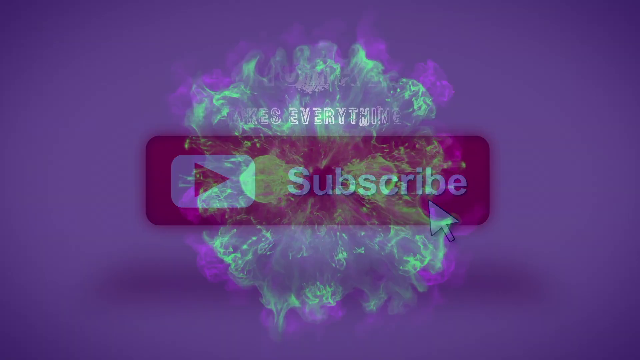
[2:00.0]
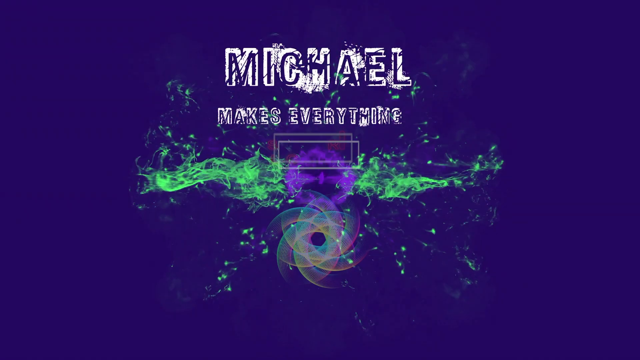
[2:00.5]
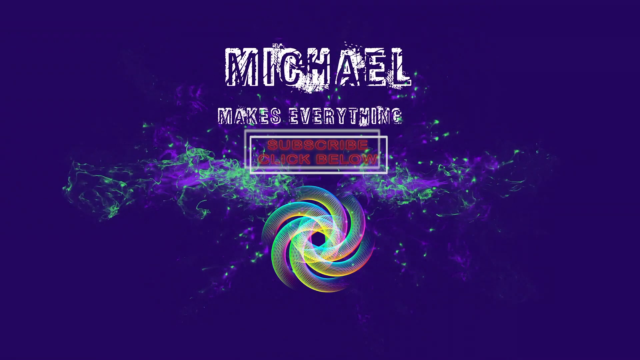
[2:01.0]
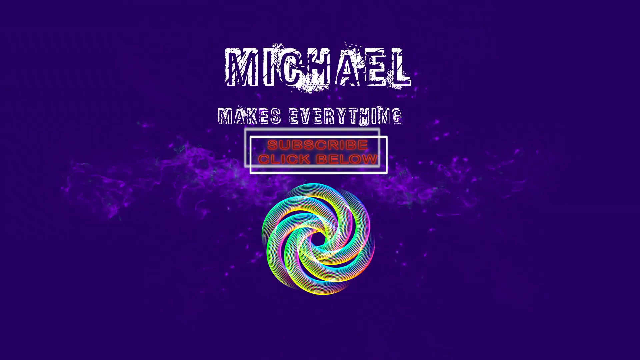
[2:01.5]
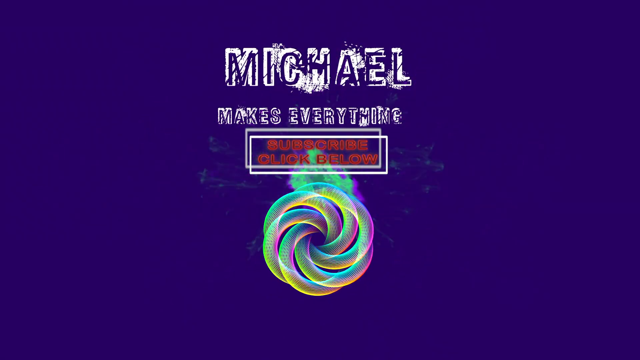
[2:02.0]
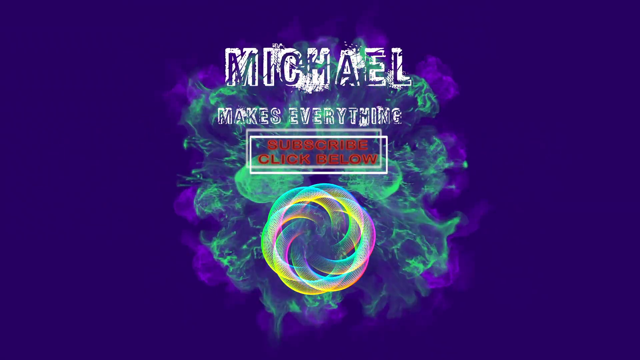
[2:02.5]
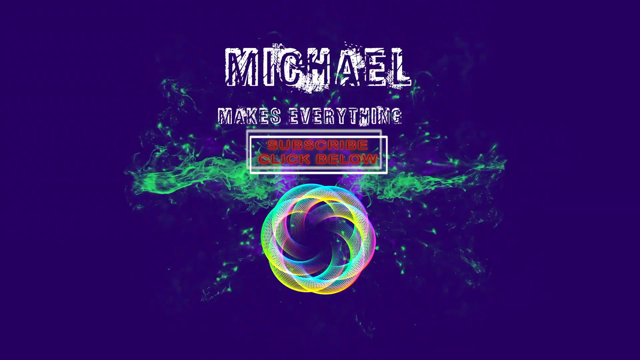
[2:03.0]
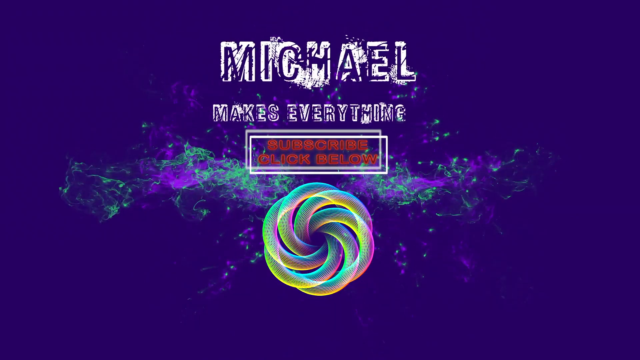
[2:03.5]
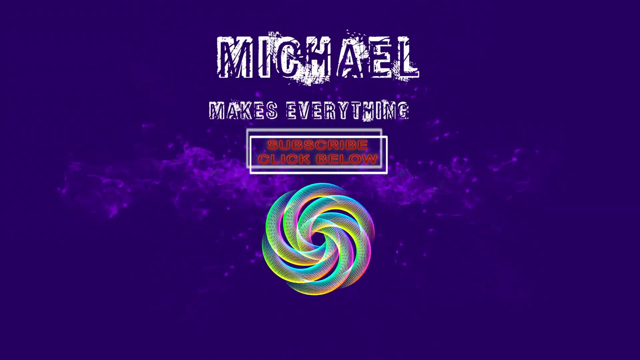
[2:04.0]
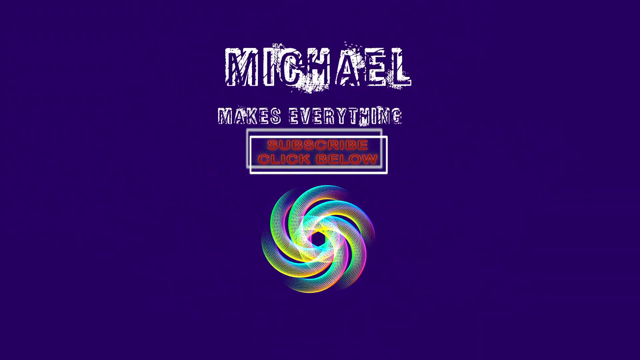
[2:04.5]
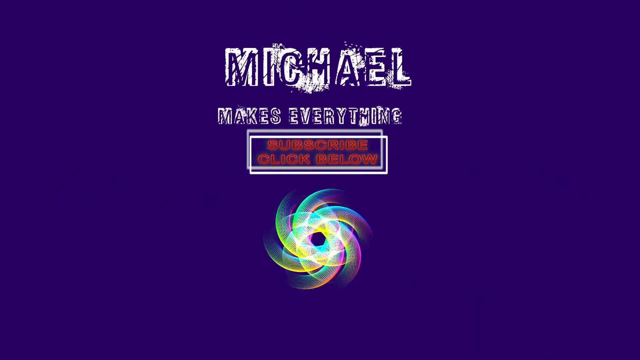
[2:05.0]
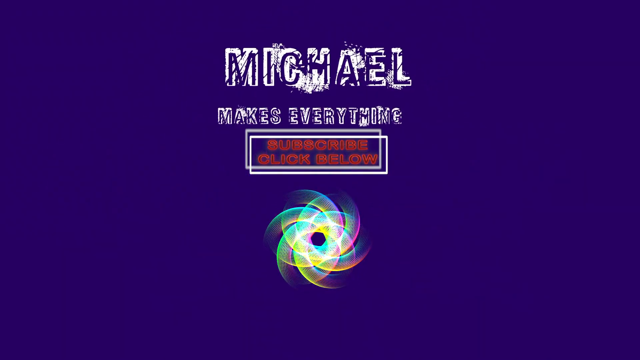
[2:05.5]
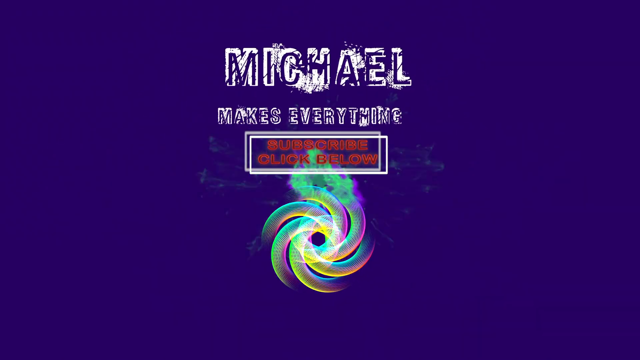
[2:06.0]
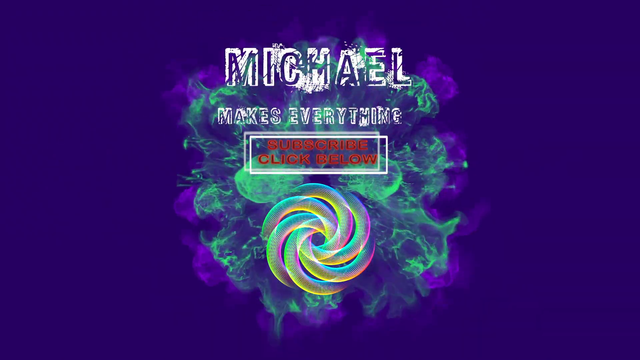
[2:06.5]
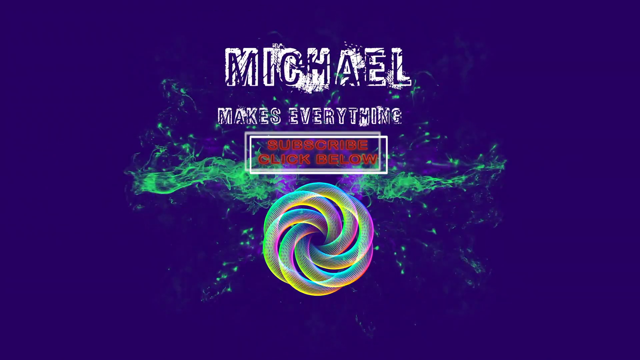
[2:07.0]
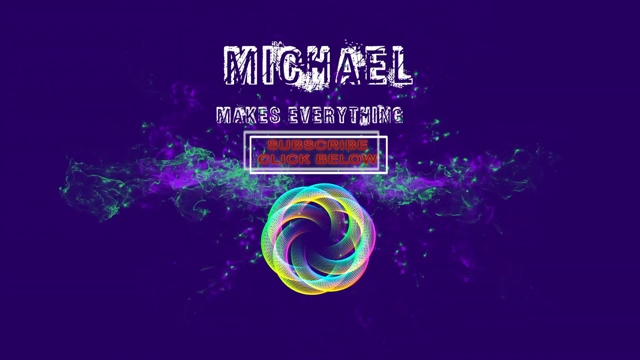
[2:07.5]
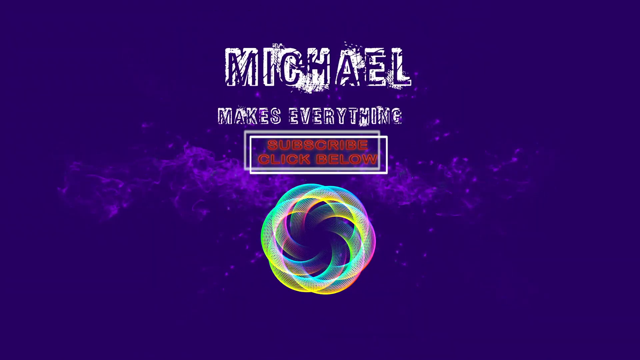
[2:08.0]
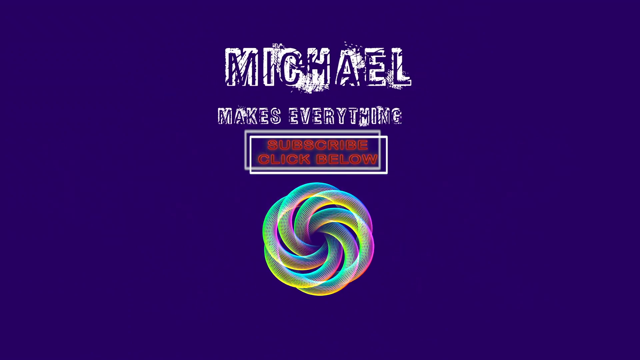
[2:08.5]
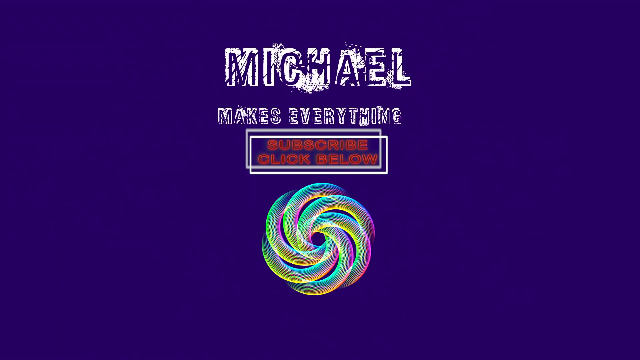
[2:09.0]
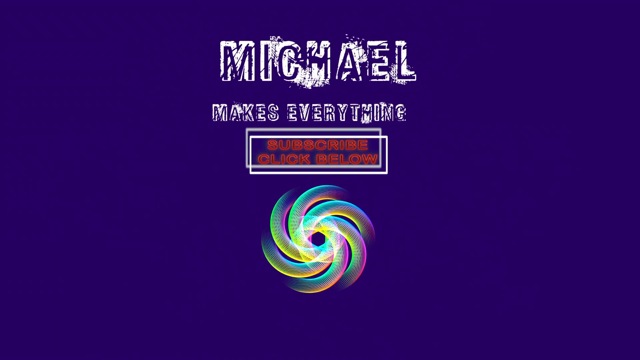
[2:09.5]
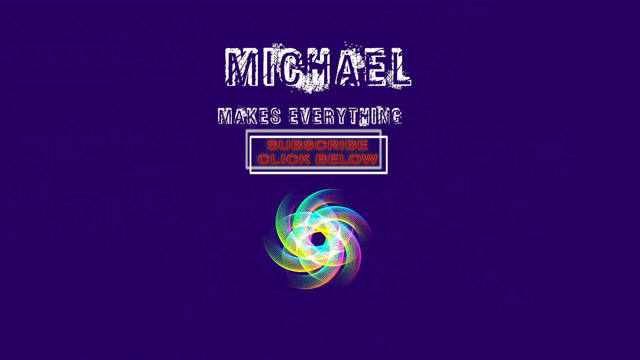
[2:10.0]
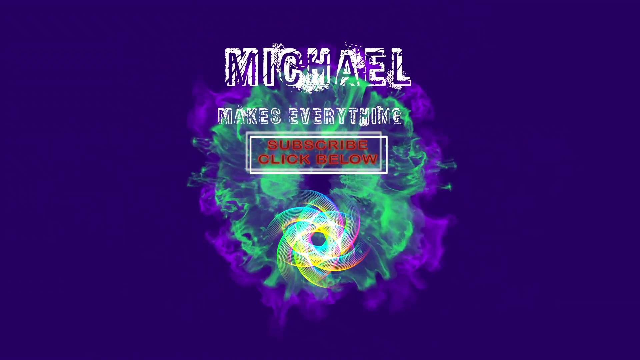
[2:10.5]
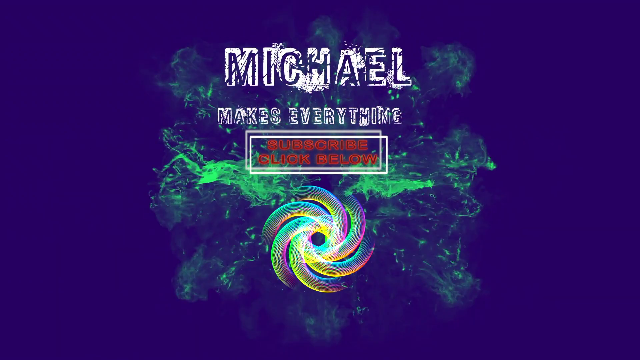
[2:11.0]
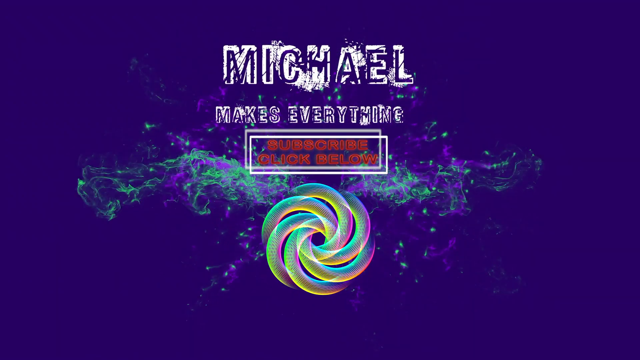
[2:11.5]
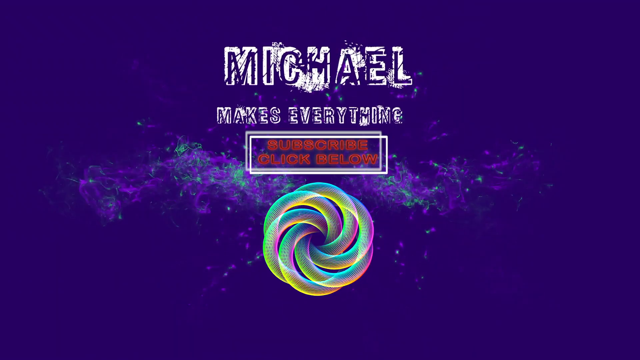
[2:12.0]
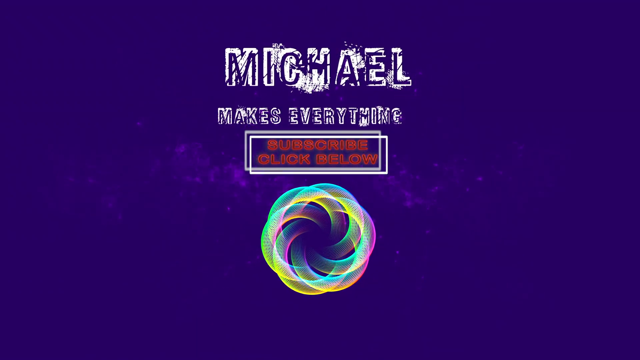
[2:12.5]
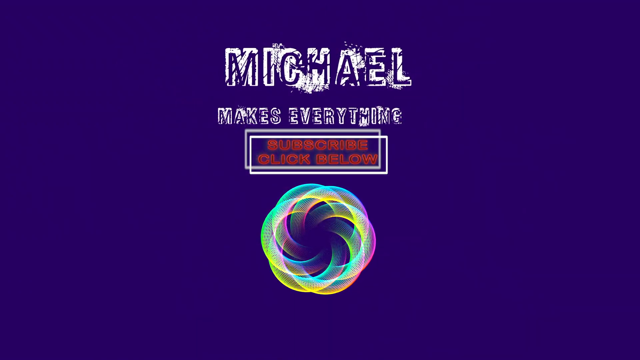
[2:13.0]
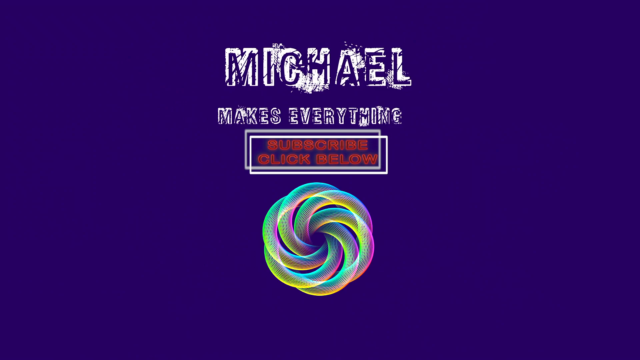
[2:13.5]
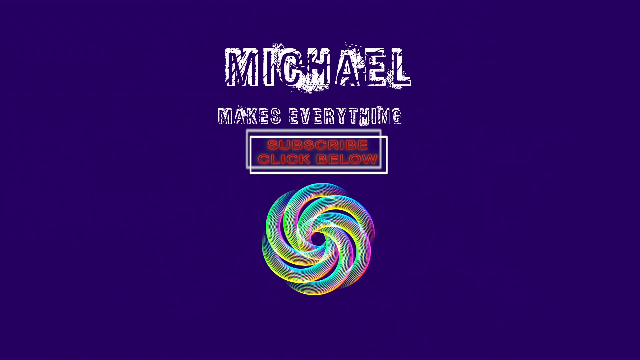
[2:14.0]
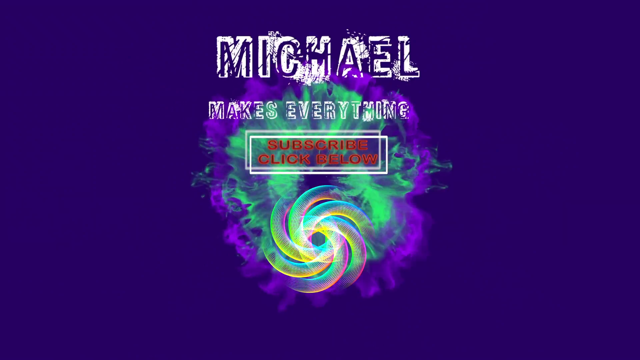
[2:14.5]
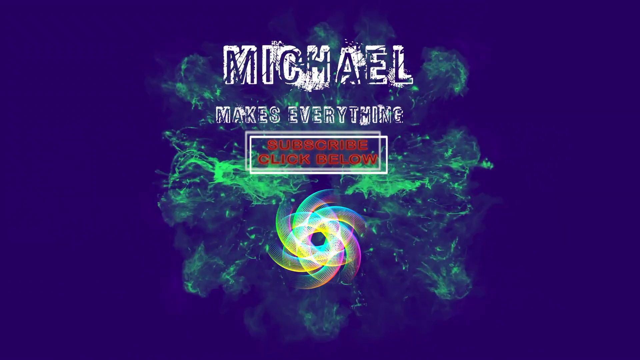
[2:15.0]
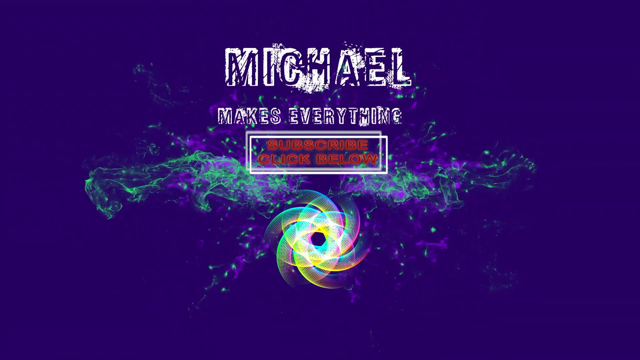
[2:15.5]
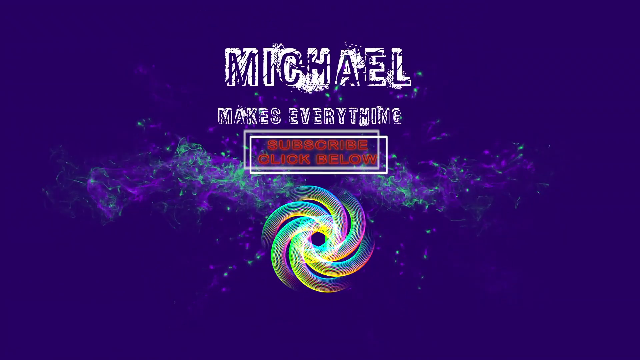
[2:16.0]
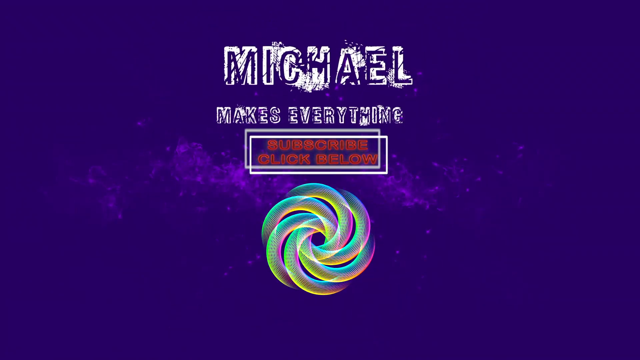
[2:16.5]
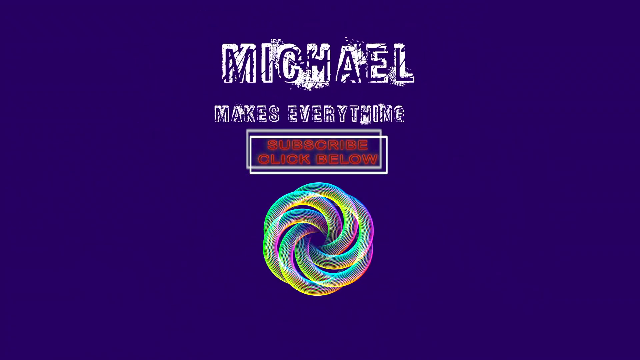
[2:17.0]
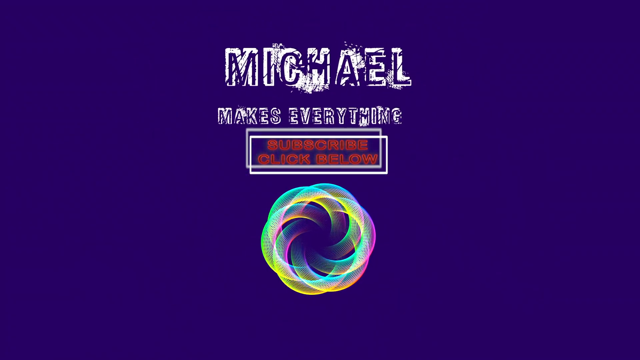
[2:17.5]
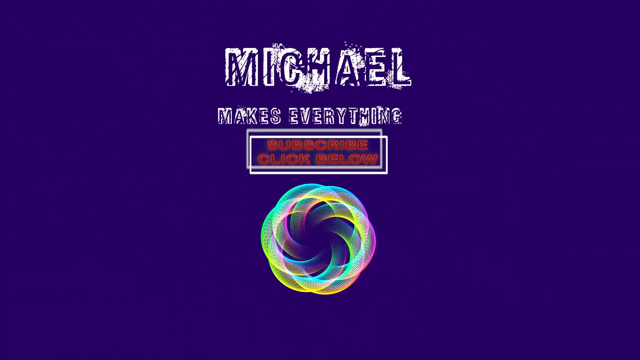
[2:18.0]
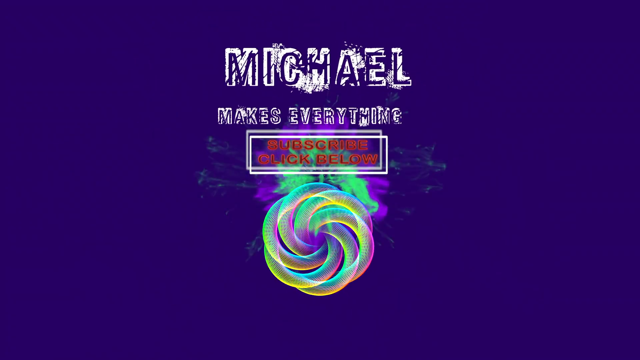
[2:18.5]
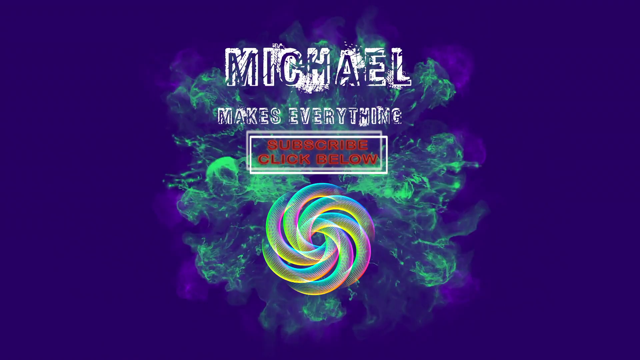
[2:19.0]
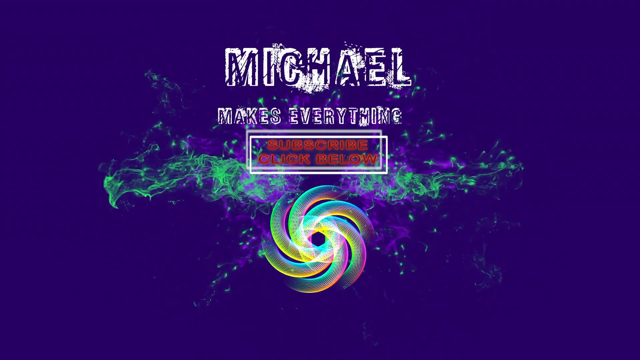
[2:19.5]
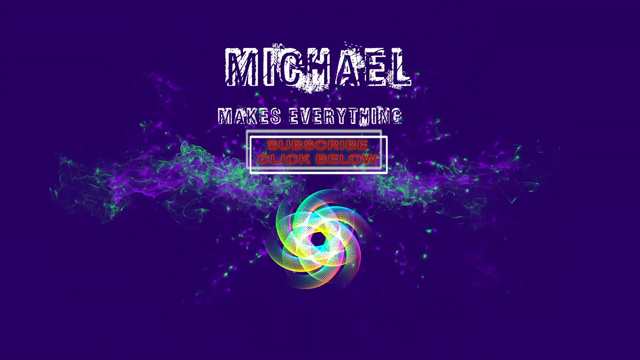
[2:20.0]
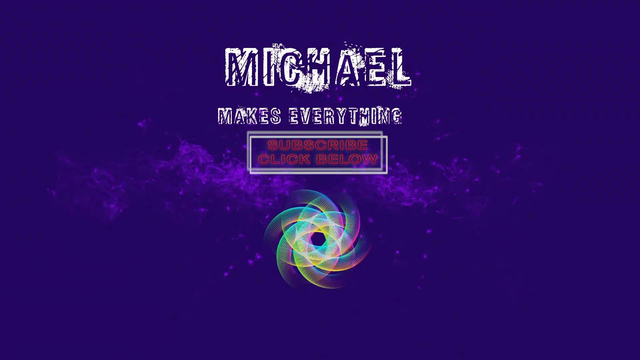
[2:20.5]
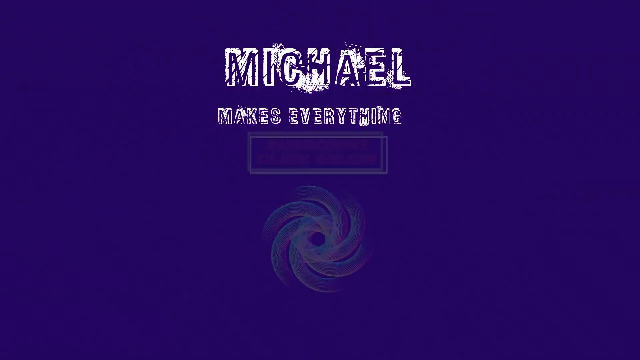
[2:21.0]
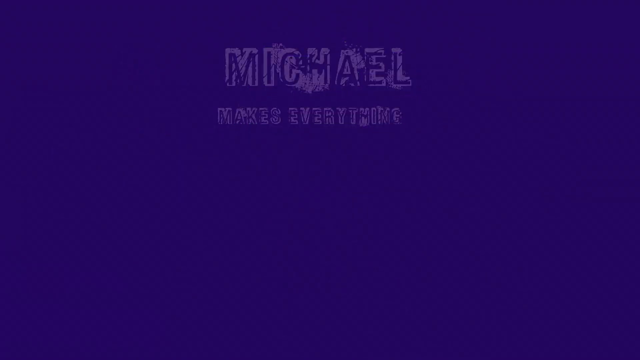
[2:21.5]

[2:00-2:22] The background is purple with some sort of flaming green and purple flower in the back, and the word "subscribe" fades away. The flaming flower bursts, and the background changes to various shades of blue, basically dark blue with some light blue. The words "Michael makes everything" appear, and underneath them is a circular shape in green, yellow, pink and purple that seems like entwined ropes more than a flower. Behind it are bursting blue and green colors. The entwined ropes seem to spin as more bursts of blue, green and purple colors appear behind them. As the bursts disappear, the entwined rope takes on various shapes, at one moment looking like a star. Under "Michael makes everything" is also the word "subscribe" inside a rectangle with white borders. Another burst of green, yellow and blue colors appears in the background, and the entwined circle continues to change shape.